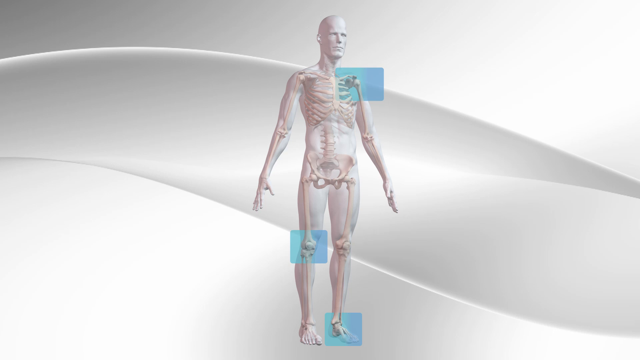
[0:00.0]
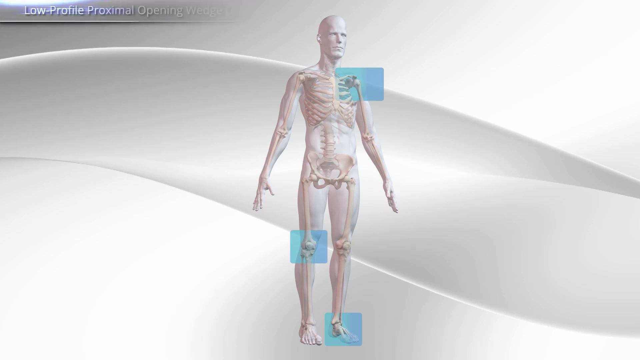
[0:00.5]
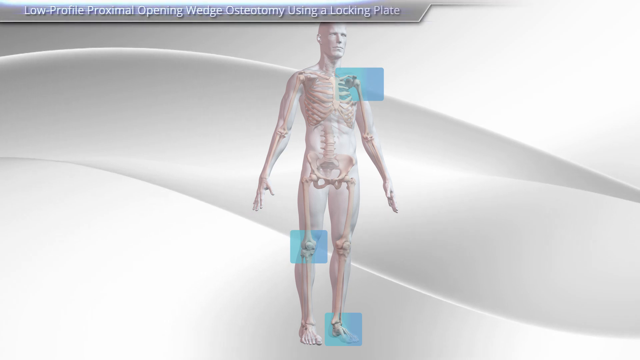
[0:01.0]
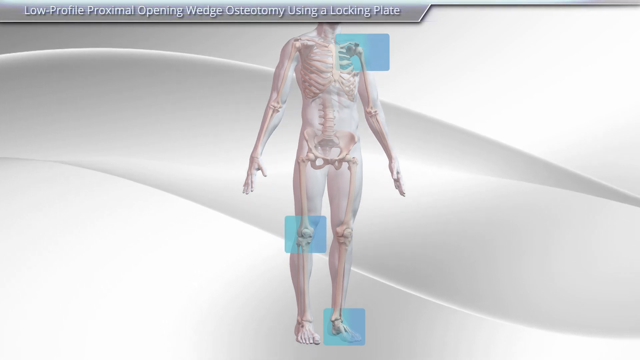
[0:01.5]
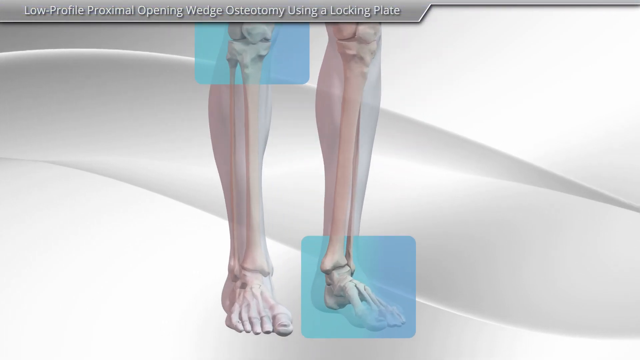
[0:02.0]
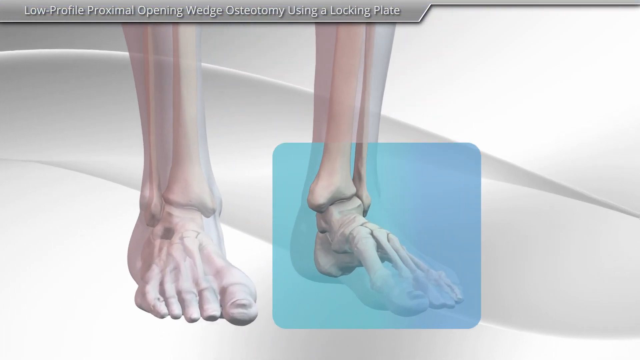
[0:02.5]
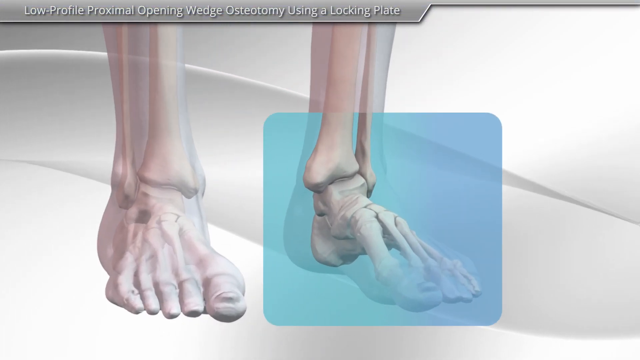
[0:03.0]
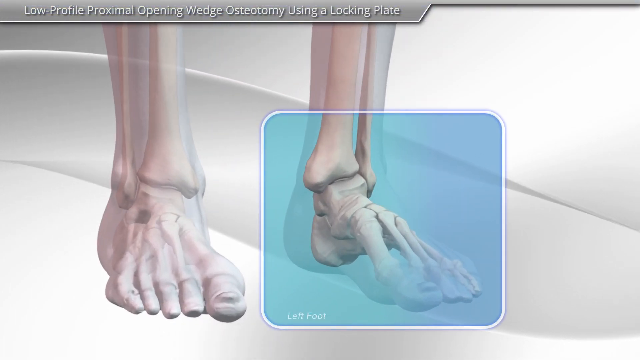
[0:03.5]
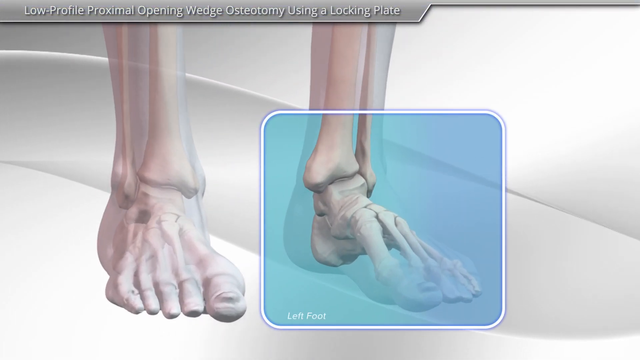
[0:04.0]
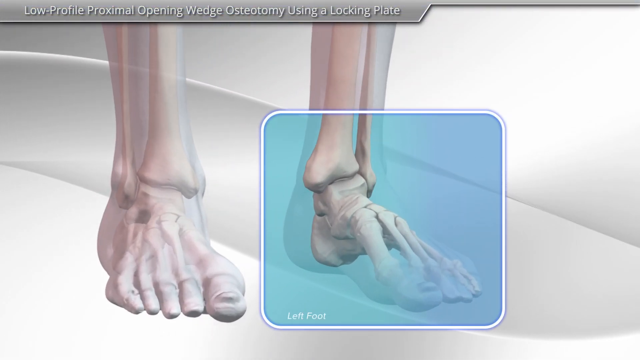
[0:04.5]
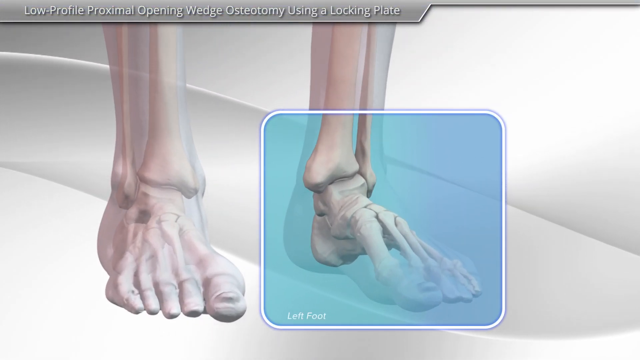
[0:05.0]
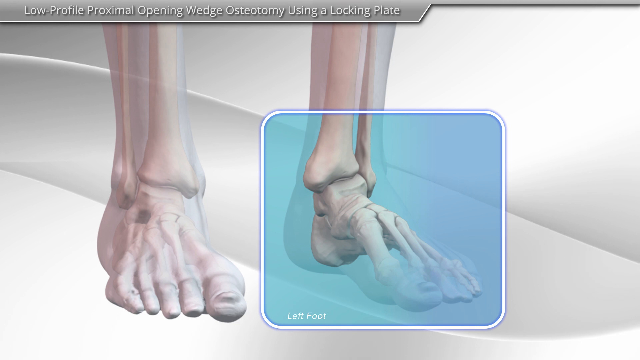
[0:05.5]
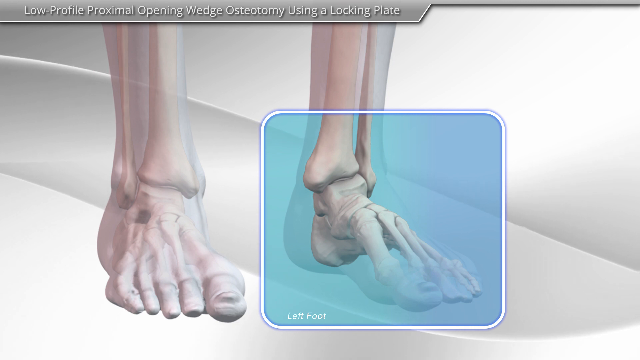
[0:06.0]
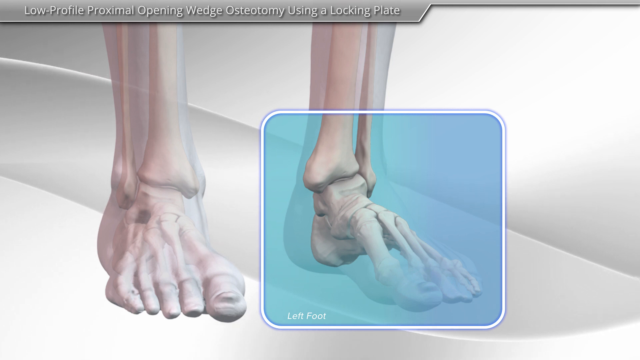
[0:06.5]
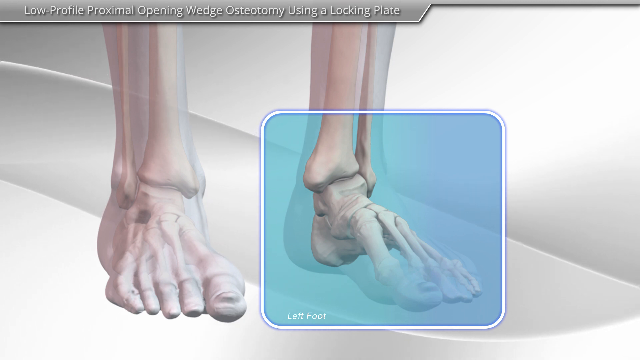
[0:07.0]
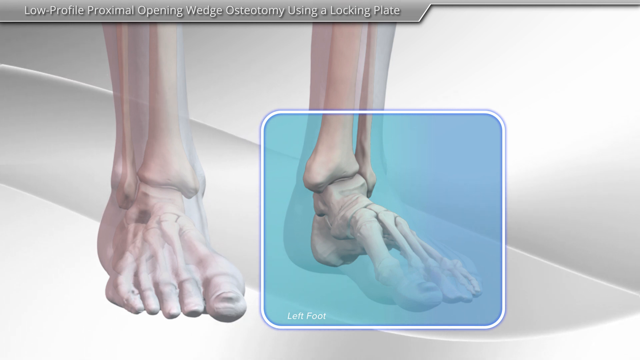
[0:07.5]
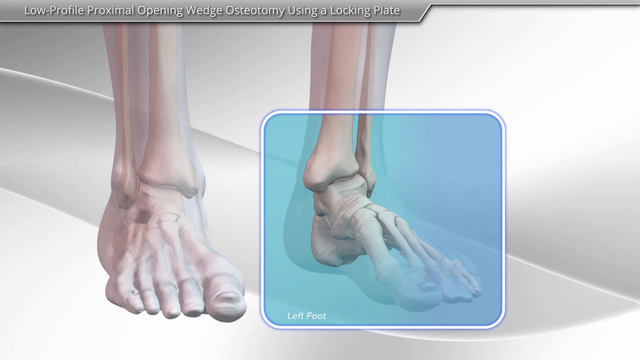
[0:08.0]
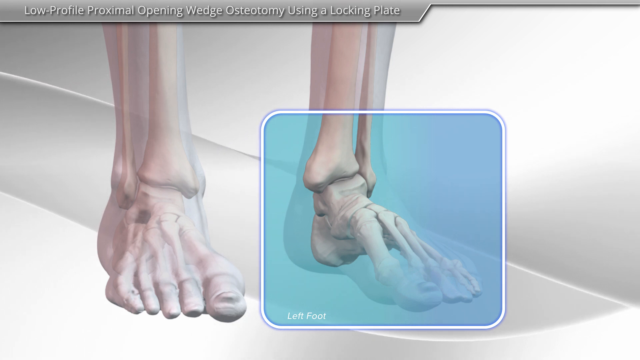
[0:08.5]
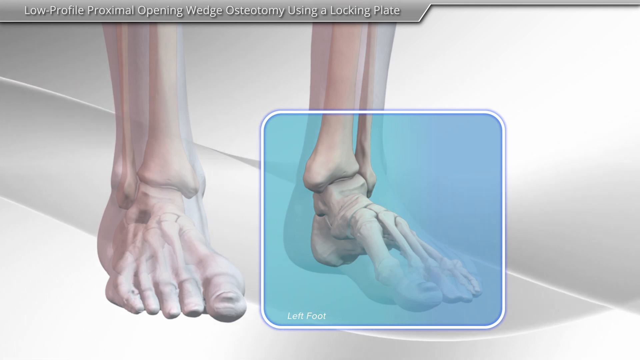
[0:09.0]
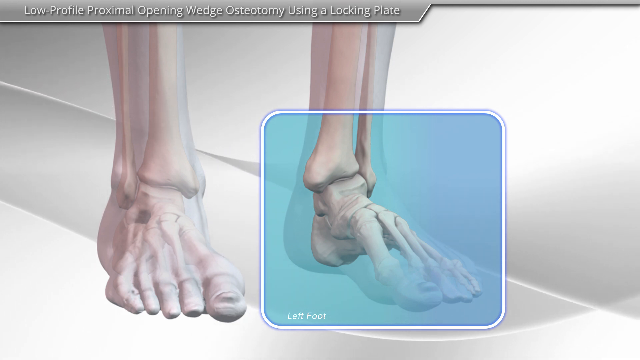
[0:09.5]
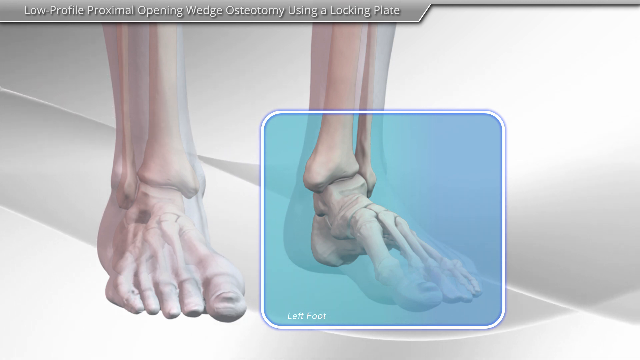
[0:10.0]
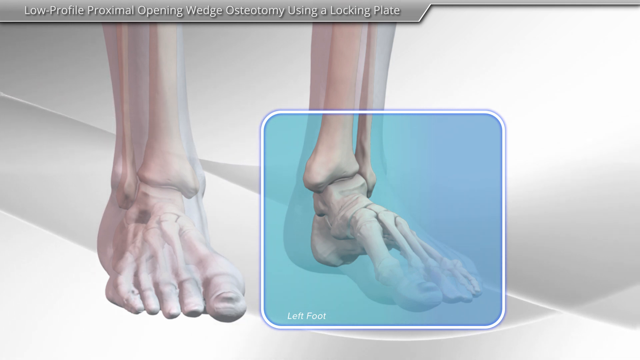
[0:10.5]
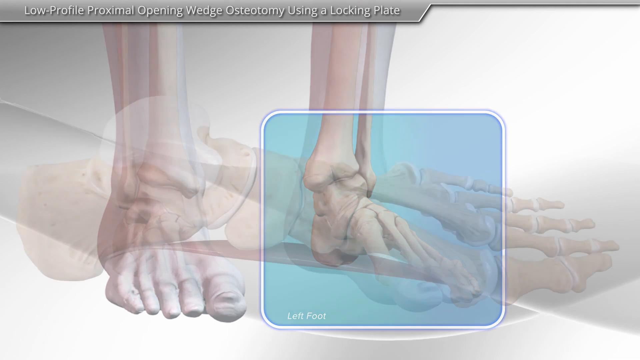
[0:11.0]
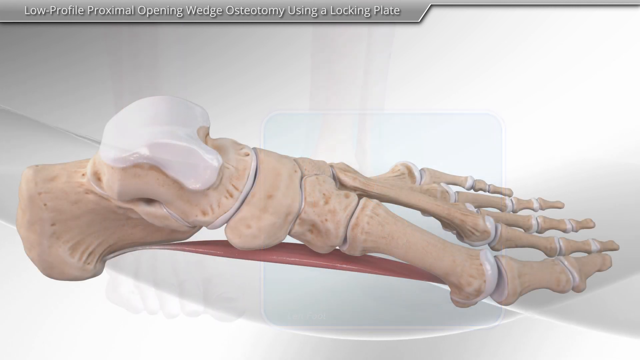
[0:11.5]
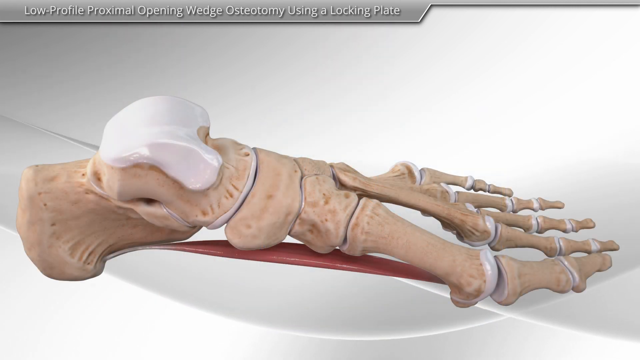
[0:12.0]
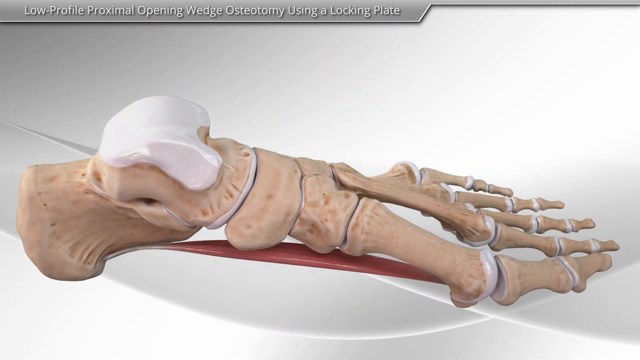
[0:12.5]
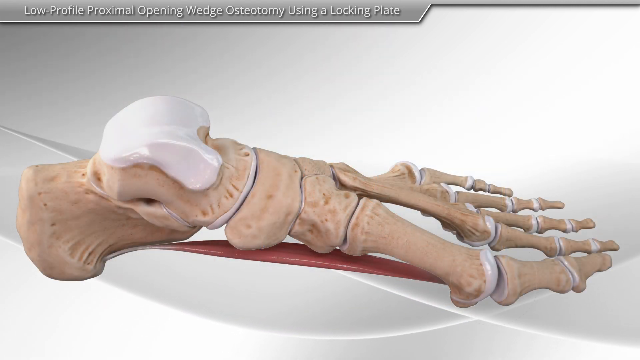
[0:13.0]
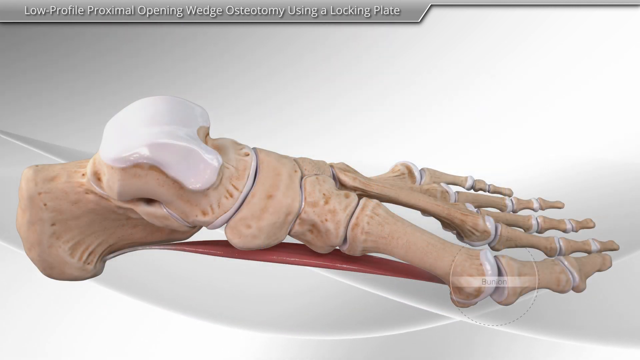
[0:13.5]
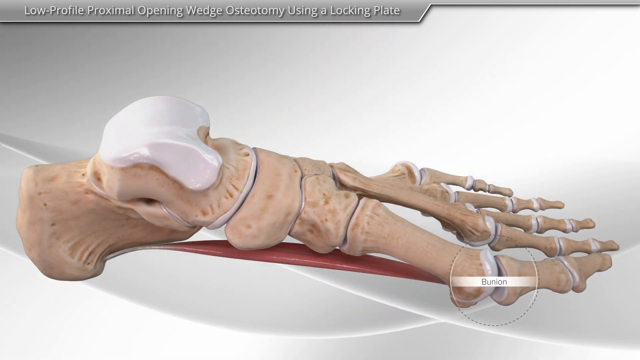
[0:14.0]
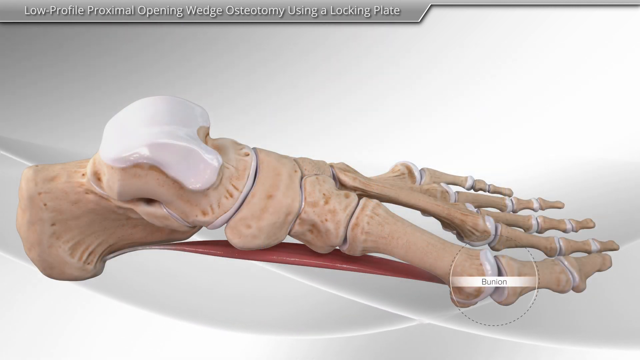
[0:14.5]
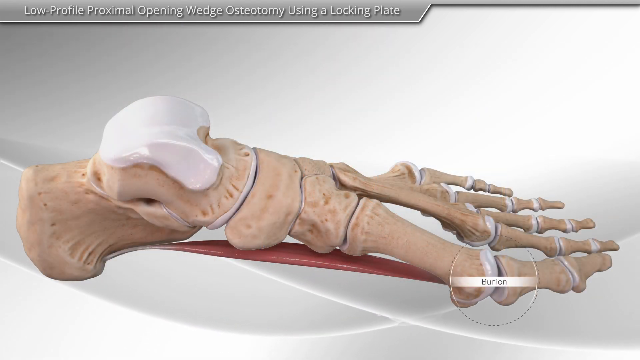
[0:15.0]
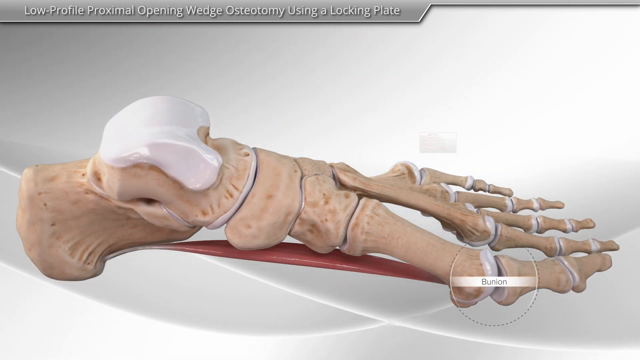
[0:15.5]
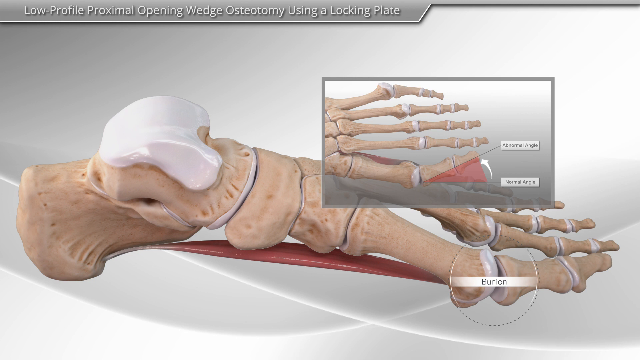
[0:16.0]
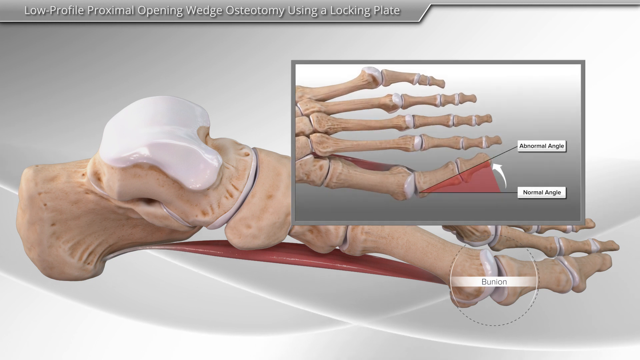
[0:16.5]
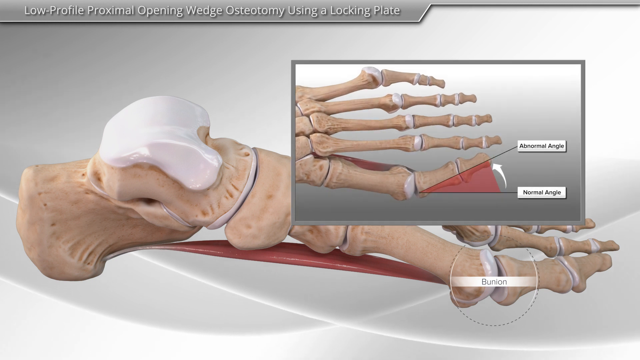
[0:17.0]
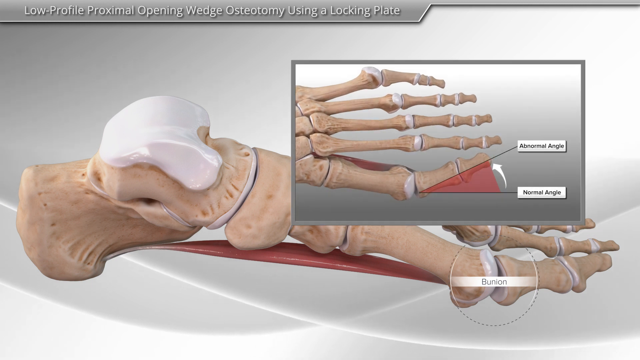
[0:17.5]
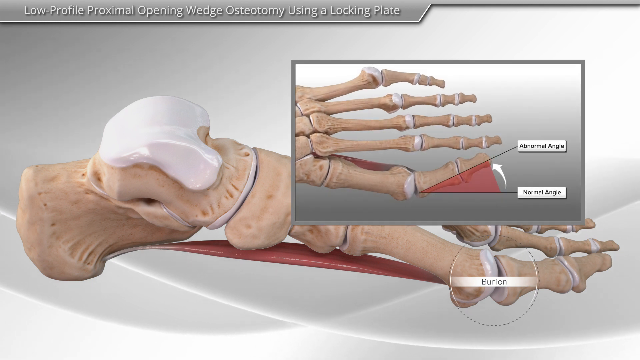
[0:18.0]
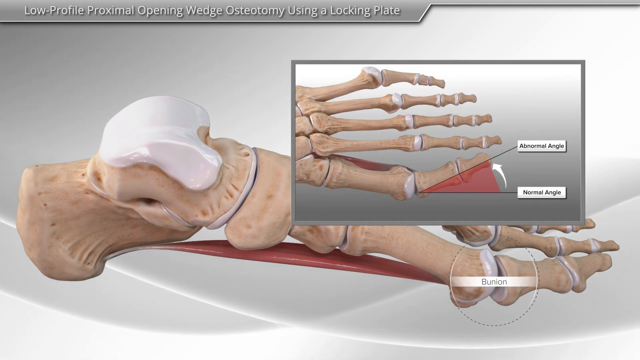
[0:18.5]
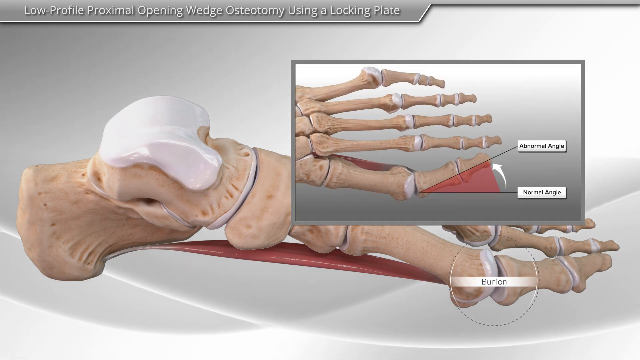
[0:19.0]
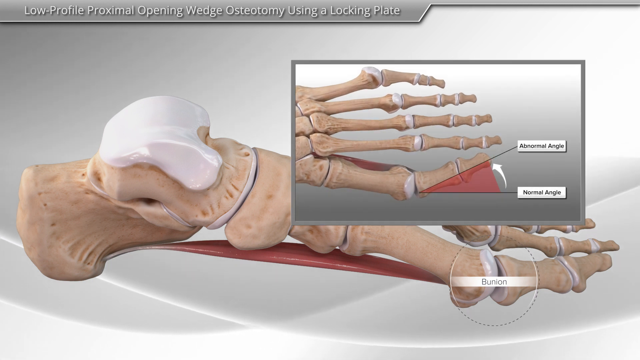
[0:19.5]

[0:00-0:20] A human skeleton appears against a white background. Across the background runs a darker stripe that forms a thick wavy line across the screen, and the stripe continuously moves toward the left throughout the video. Shortly after the start, the view zooms down and in toward the feet. A translucent blue box highlights the foot on the right, and the image freezes briefly. The view fades out and transitions to a close-up of just the foot, without the ankle bone attached. Each joint in the toes is visible, as well as parts where the bone is pitted. There is a red flat structure underneath the foot. A gray rectangle appears to grow toward the screen just over the toes, and inside this gray box is an even closer view of just the toes. Two labels point to one of the joints on the toe.